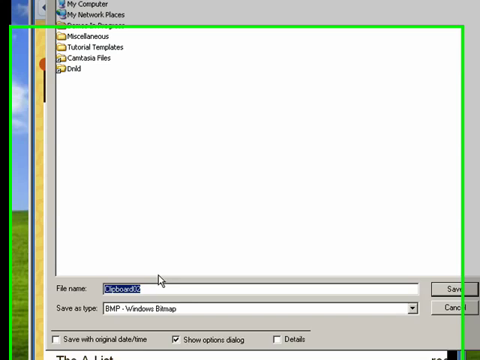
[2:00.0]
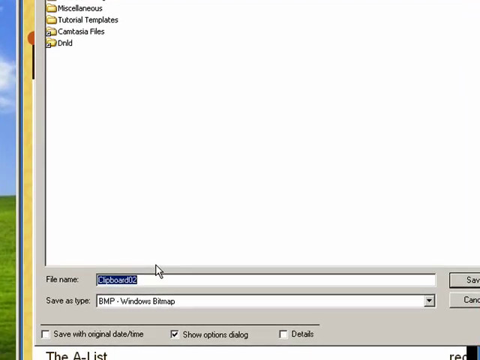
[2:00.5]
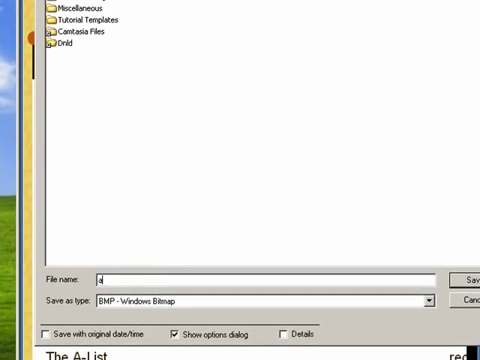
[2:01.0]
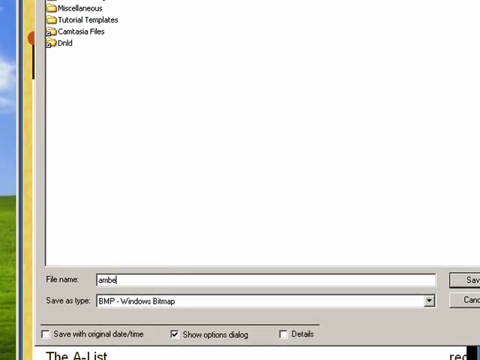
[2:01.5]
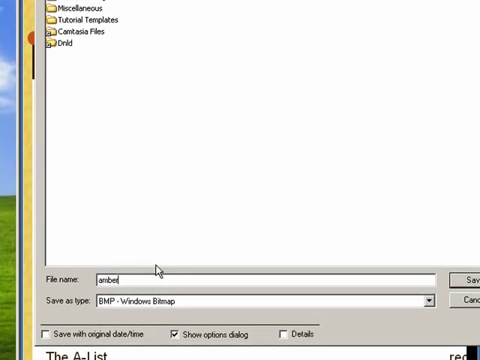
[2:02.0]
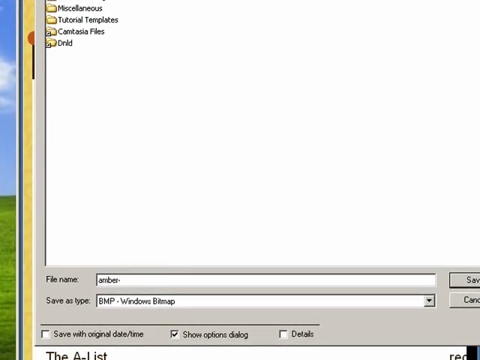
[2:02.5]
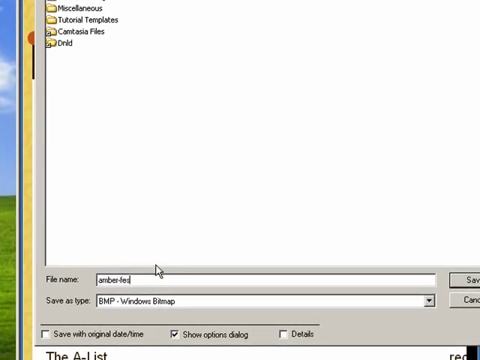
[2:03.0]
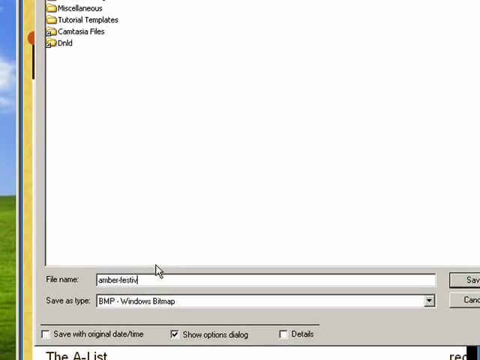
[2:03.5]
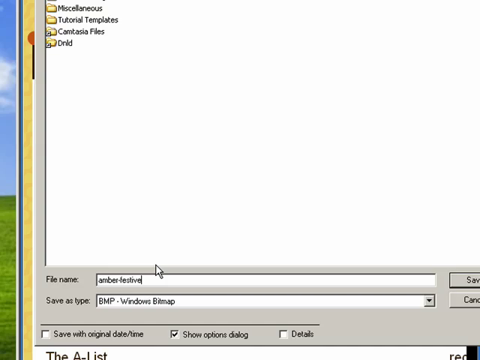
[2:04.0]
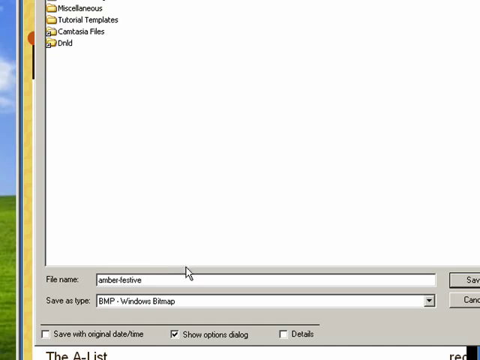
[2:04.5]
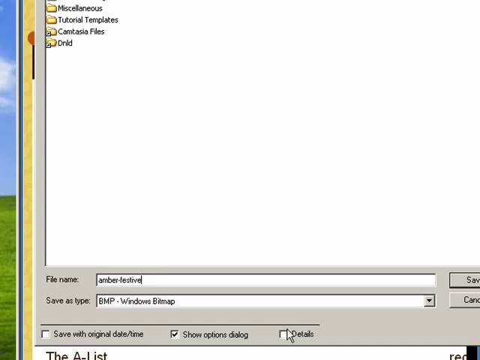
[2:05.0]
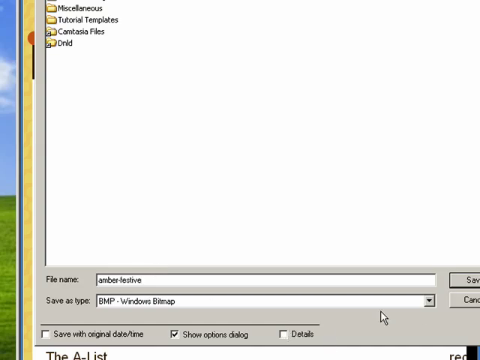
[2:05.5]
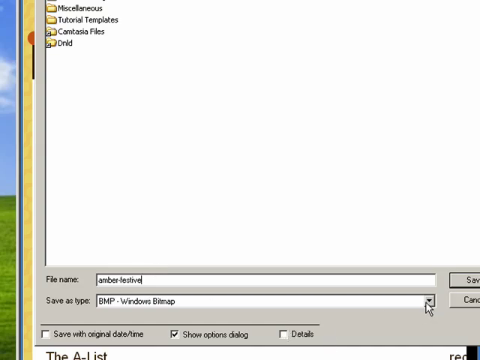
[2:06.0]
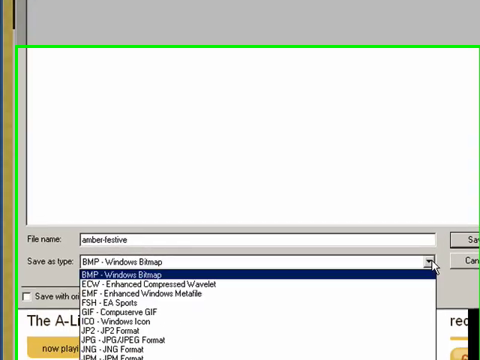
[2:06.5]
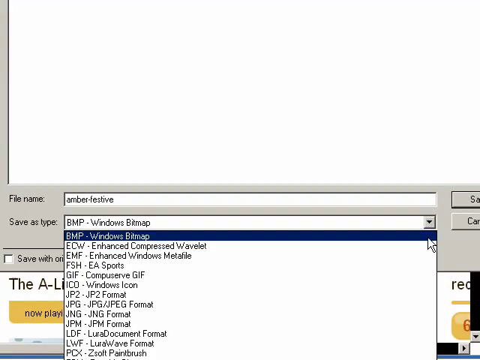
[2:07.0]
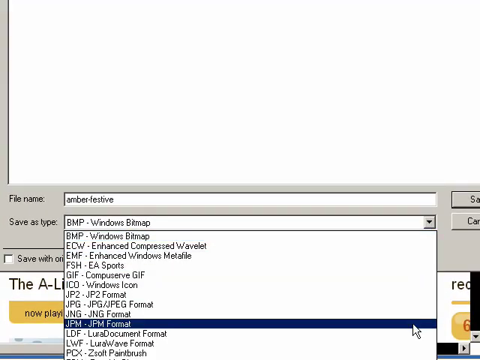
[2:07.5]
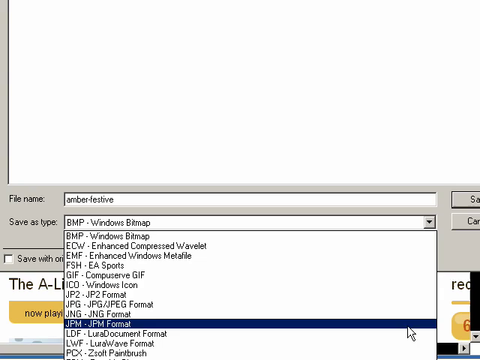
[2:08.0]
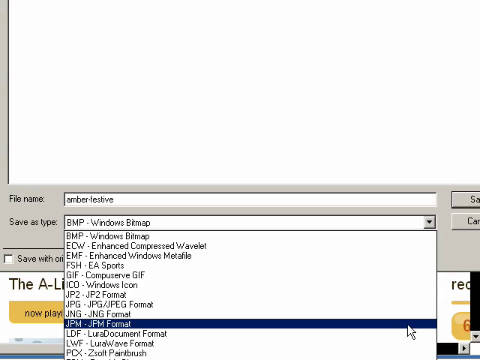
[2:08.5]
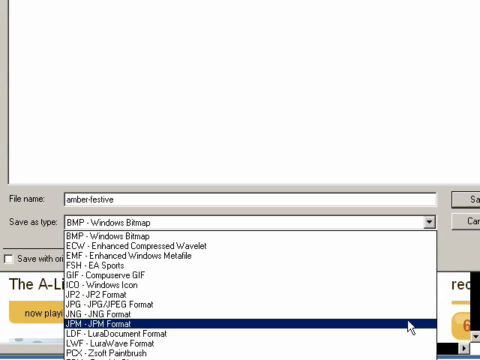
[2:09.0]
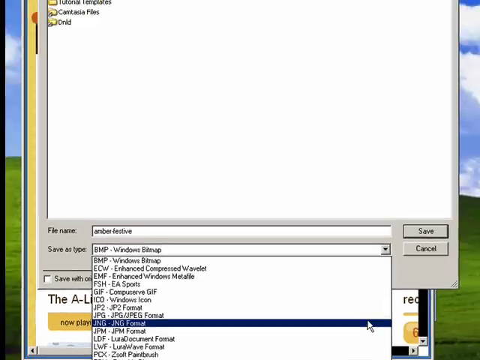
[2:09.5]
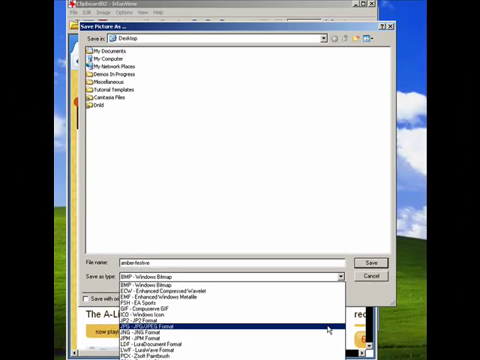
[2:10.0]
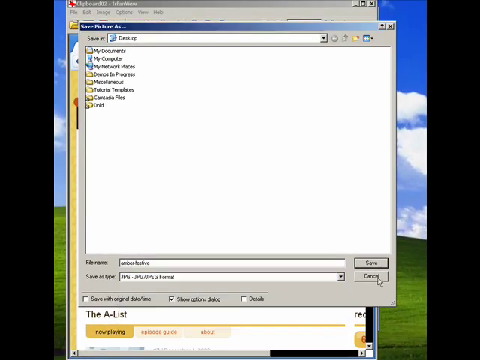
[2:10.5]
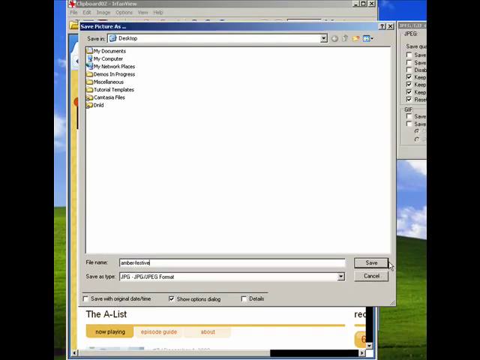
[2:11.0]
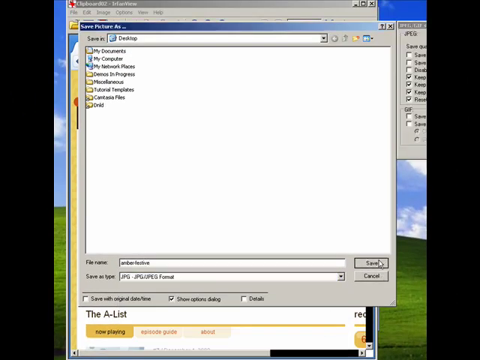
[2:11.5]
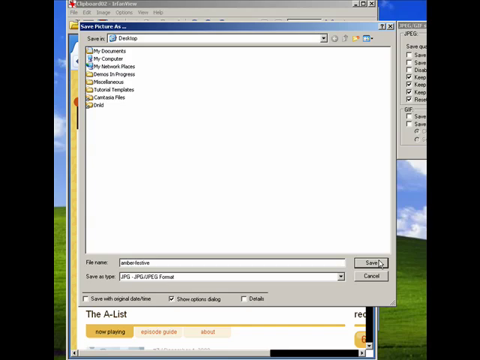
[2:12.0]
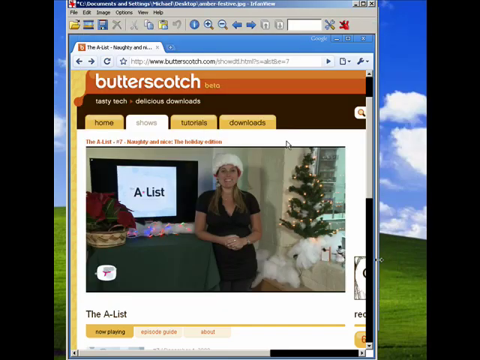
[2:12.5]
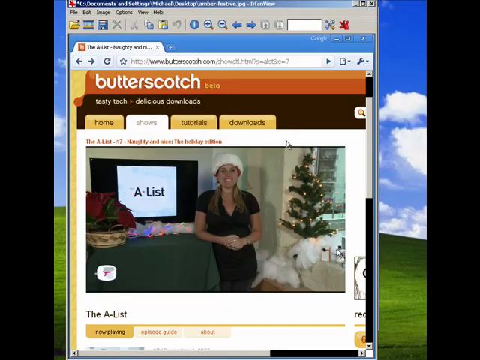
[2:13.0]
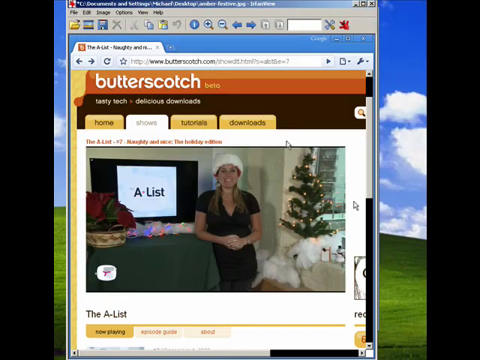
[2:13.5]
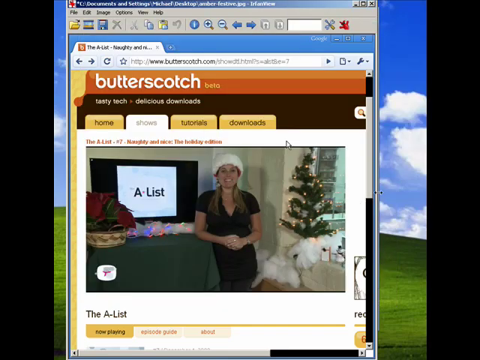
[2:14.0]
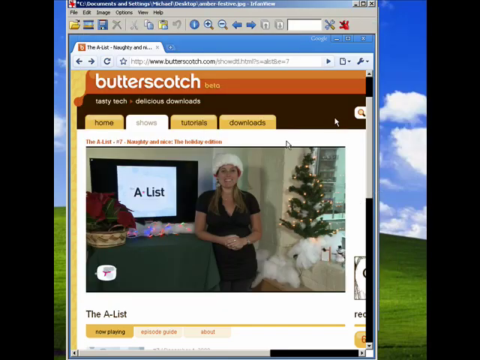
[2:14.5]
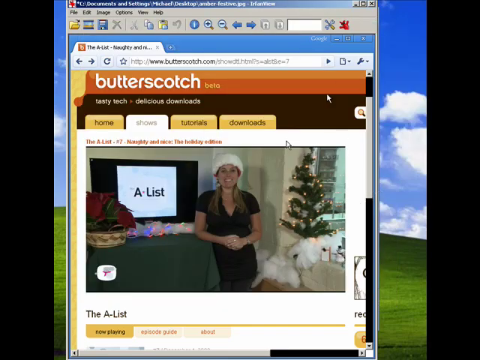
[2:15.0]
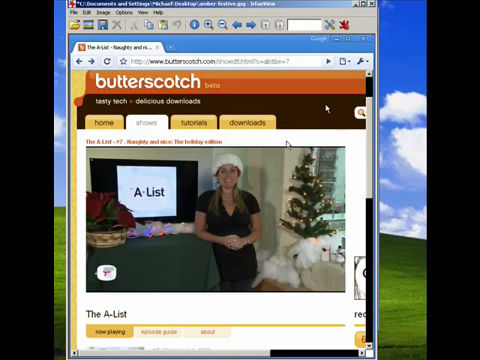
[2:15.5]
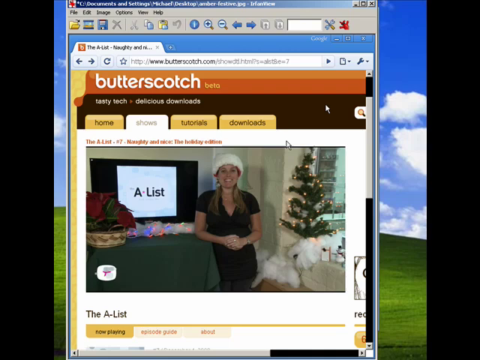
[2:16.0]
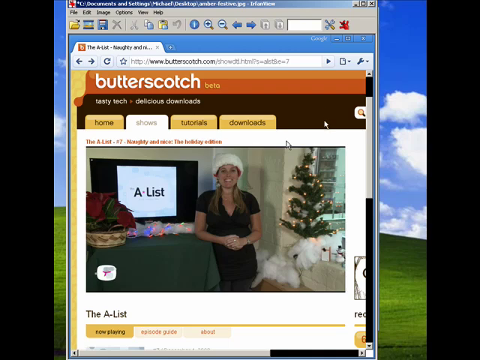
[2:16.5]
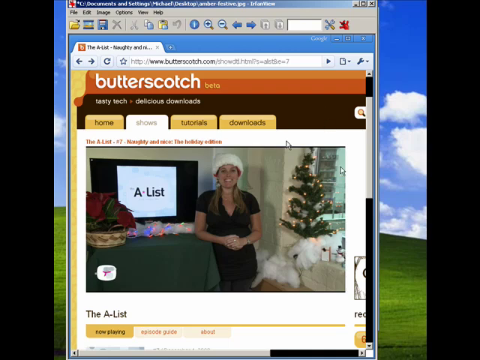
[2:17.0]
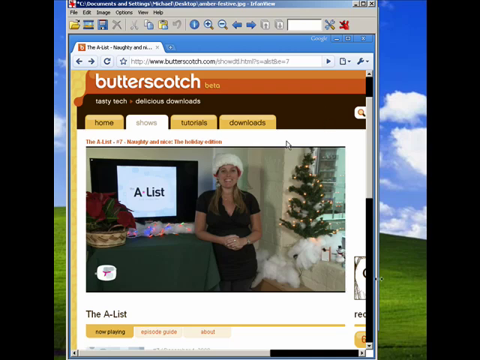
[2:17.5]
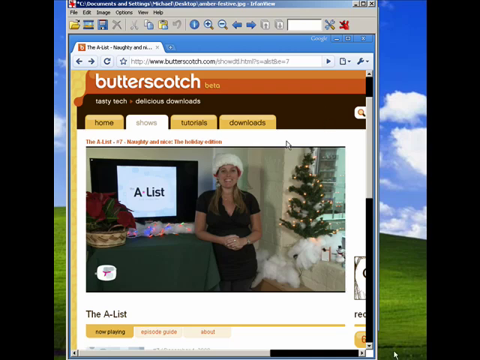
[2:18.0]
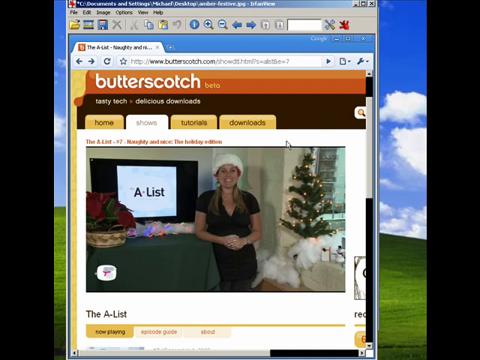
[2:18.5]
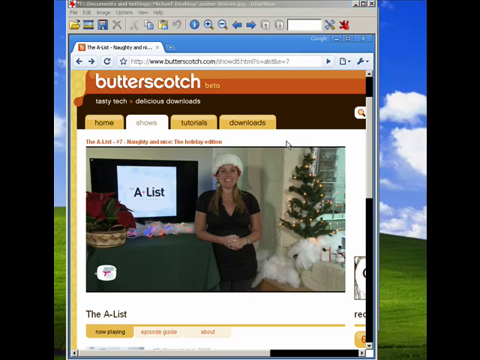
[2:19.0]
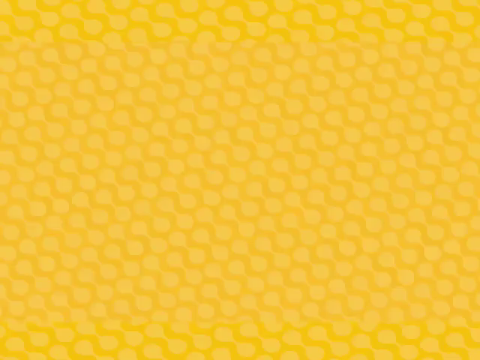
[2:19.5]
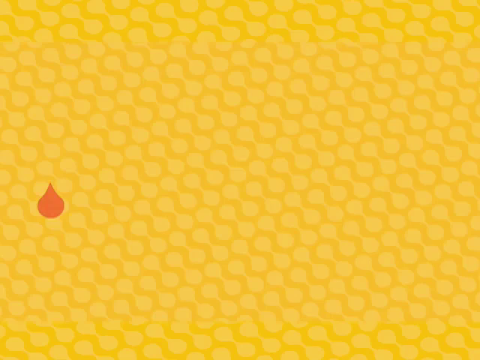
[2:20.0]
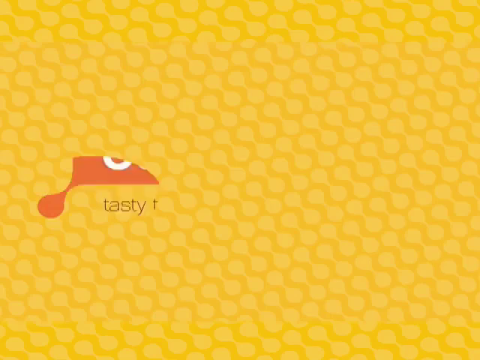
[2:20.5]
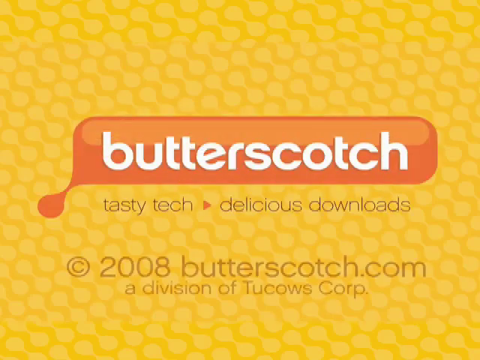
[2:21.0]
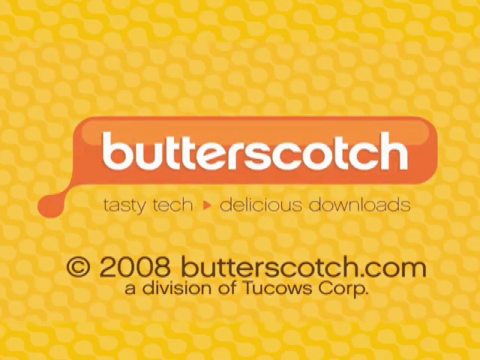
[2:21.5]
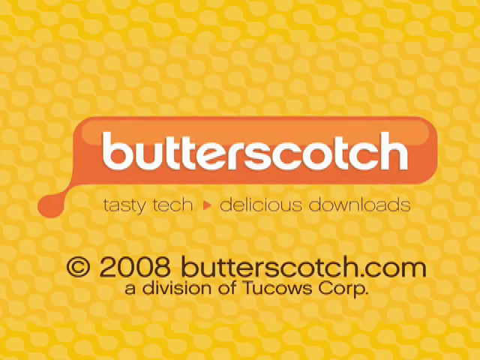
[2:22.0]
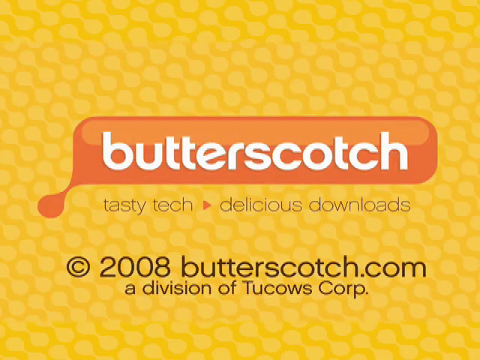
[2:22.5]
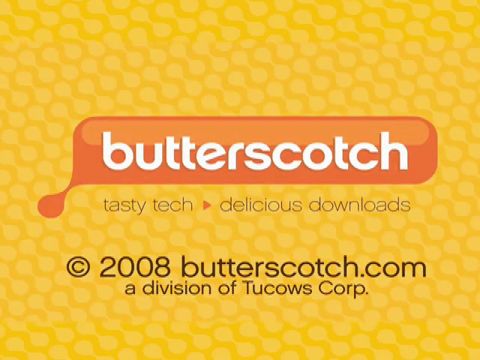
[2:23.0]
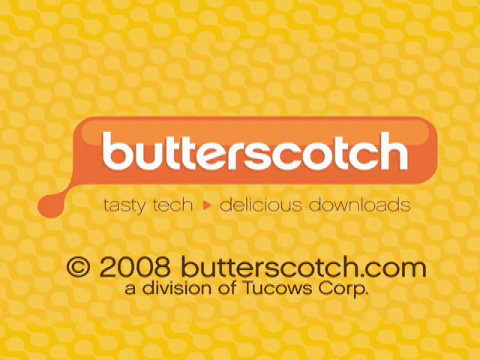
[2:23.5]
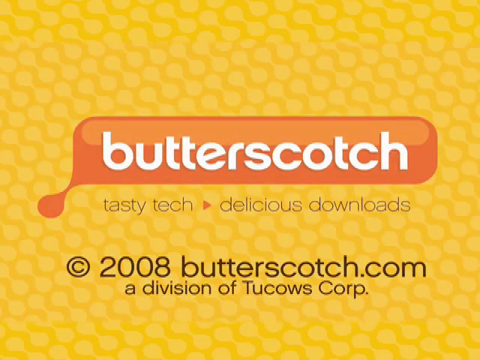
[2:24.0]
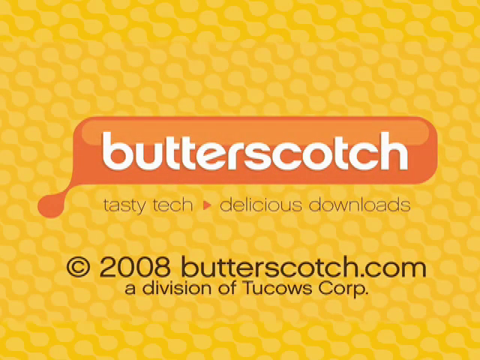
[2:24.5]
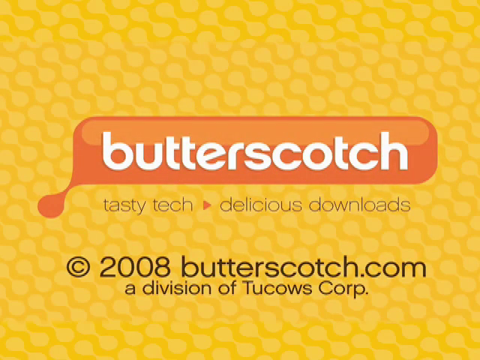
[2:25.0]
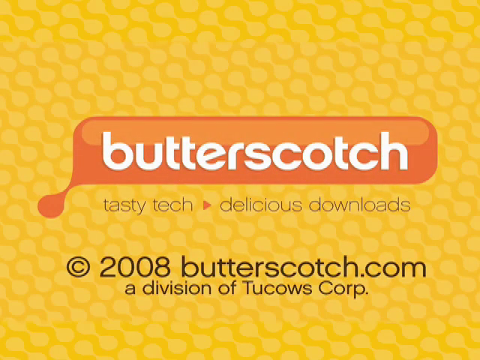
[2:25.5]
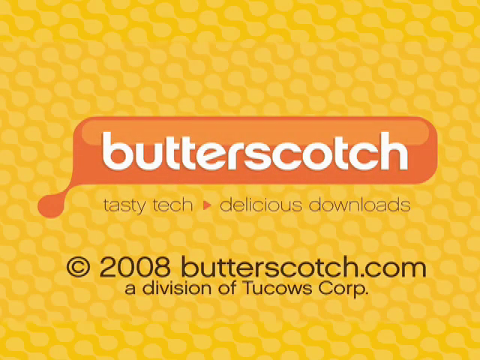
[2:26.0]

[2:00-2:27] The save menu is in the middle of the screen, and the screen zooms in on its bottom left portion, where there are fields for the file name and save as type. The mouse clicks on the file name, highlighting it all in blue, deletes it and replaces it with "Amber Festive". He clicks the save as type drop-down menu, several options appear, and he clicks the JPEG option. He then clicks the save button at the bottom right, and the menu disappears, revealing the Butterscotch website in the background. The mouse leaves the screen toward the bottom. An ending slide, similar to the beginning of the video, shows the yellow honeycomb background, white text in the middle reading "Butterscotch", a subheader reading "Tasty tech delicious downloads", and black text at the bottom reading "2008butterscotch.com, a division of 2Cals Corporation".